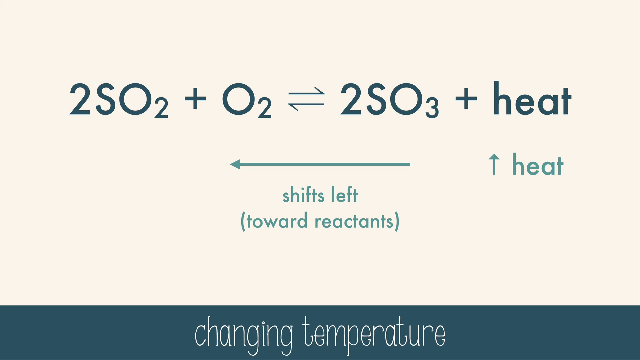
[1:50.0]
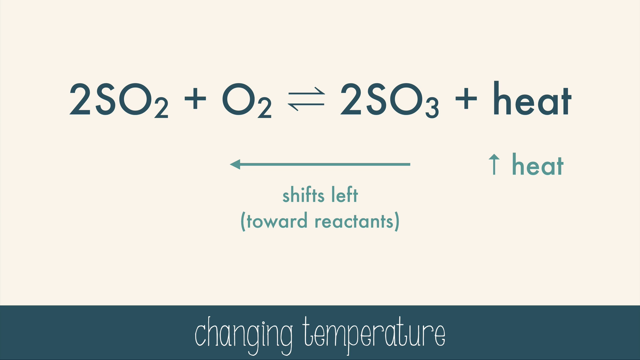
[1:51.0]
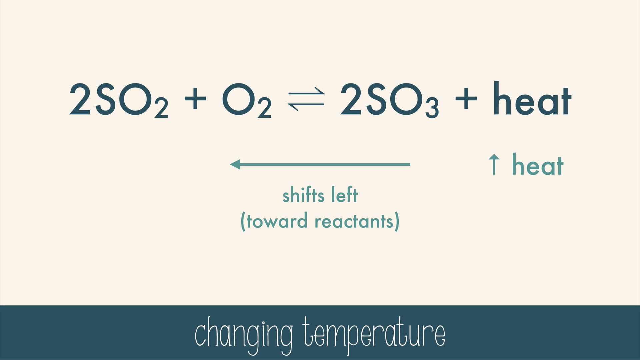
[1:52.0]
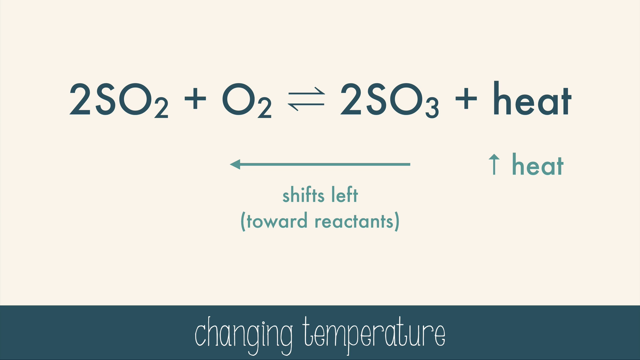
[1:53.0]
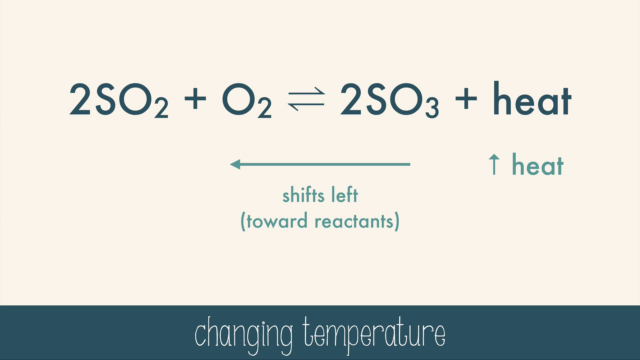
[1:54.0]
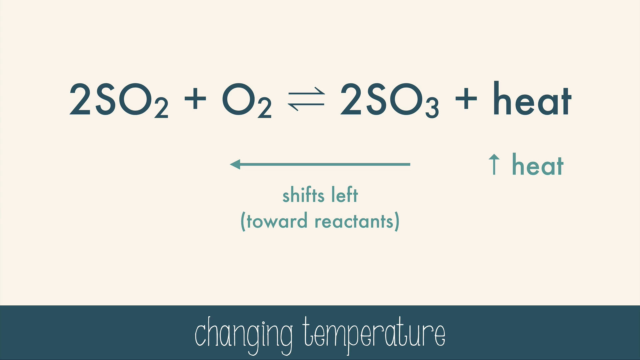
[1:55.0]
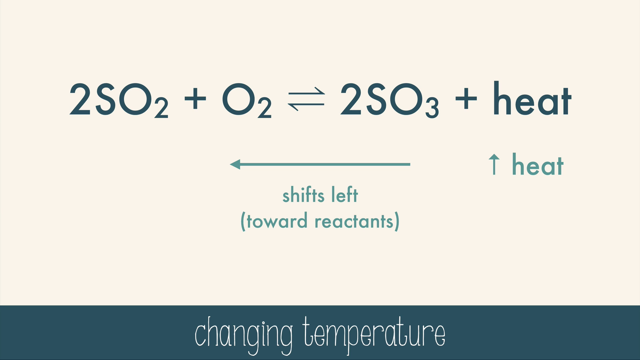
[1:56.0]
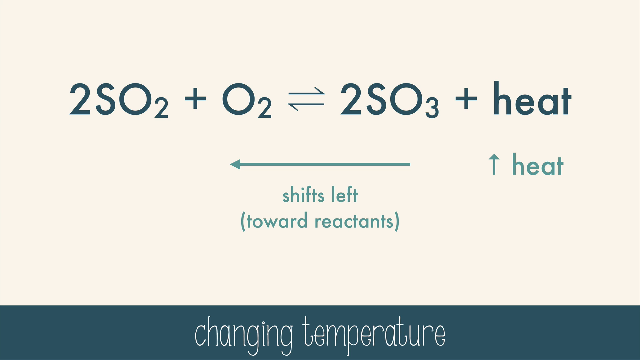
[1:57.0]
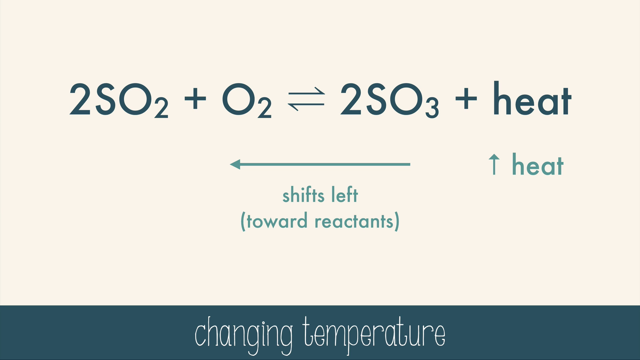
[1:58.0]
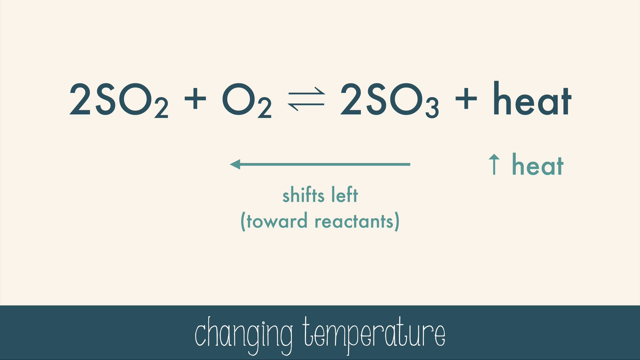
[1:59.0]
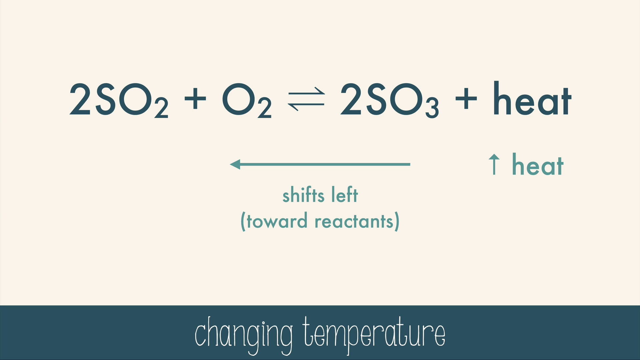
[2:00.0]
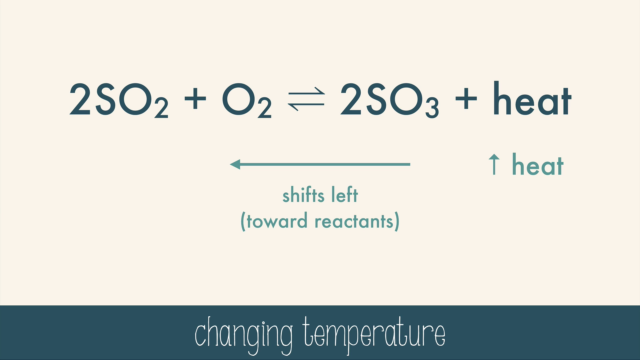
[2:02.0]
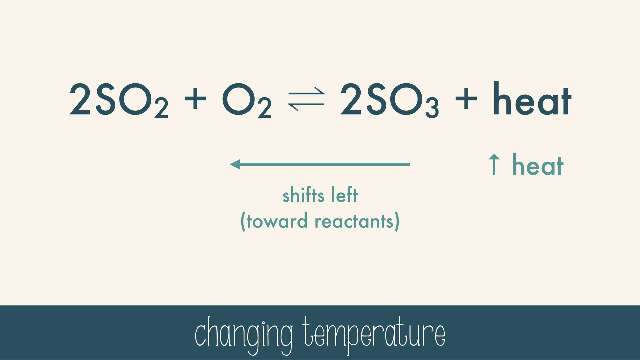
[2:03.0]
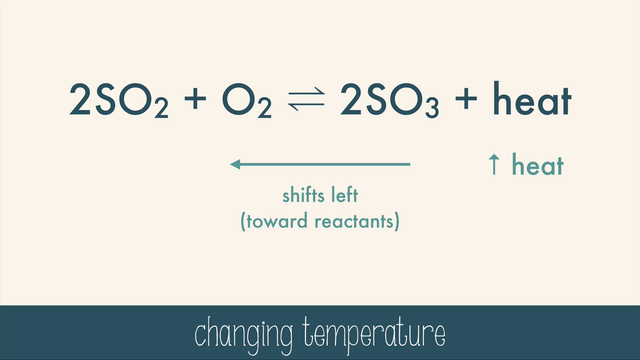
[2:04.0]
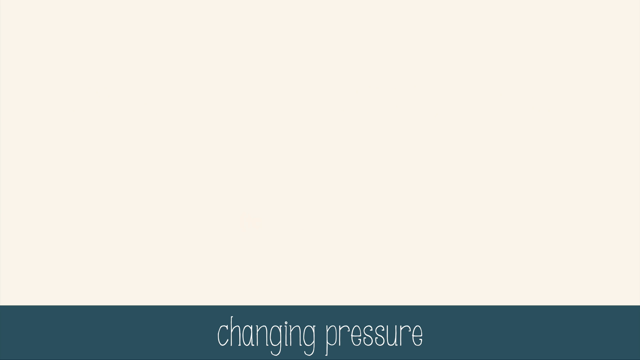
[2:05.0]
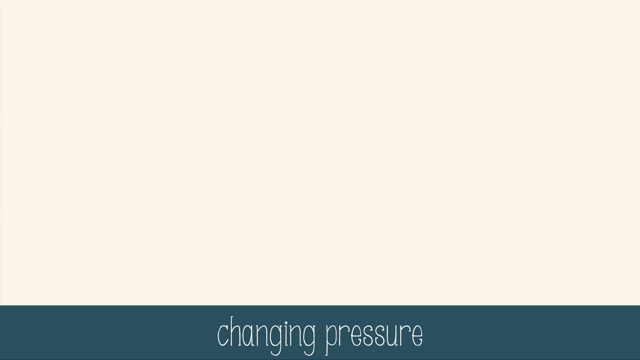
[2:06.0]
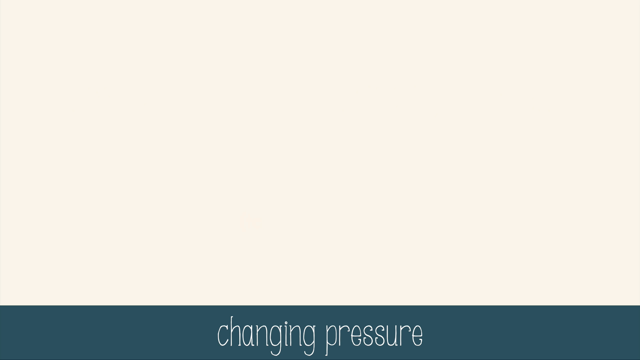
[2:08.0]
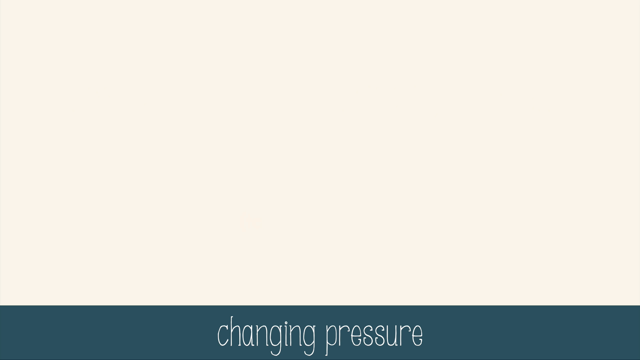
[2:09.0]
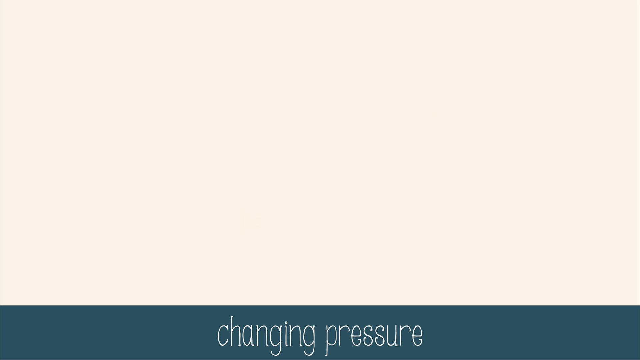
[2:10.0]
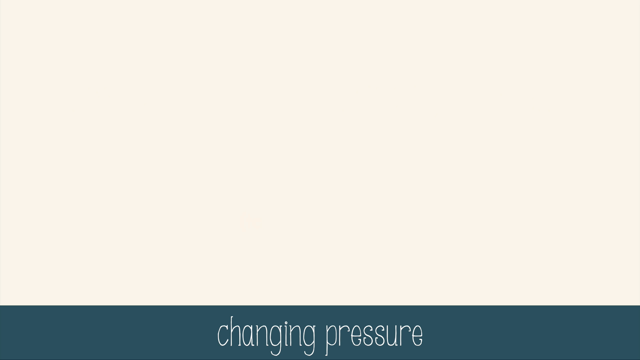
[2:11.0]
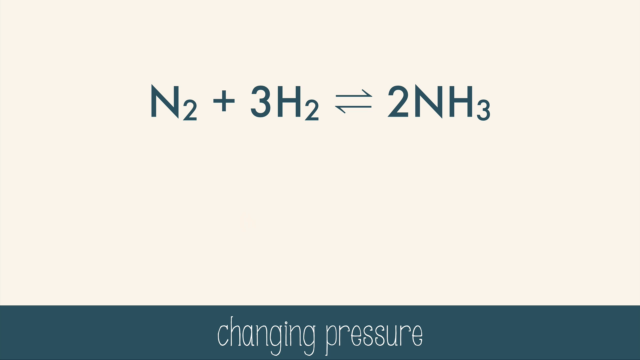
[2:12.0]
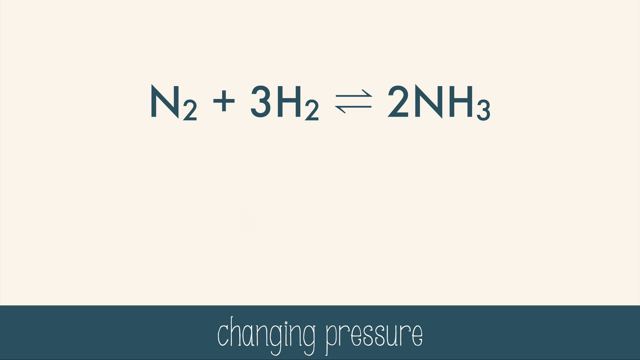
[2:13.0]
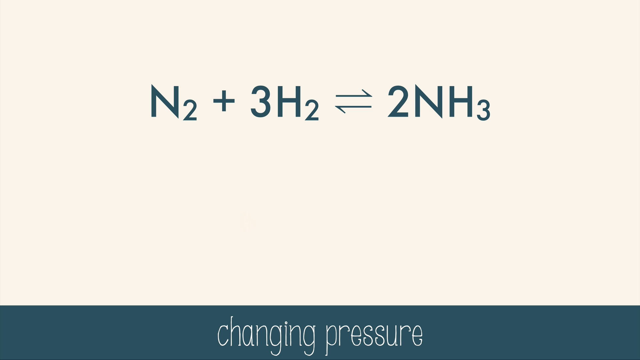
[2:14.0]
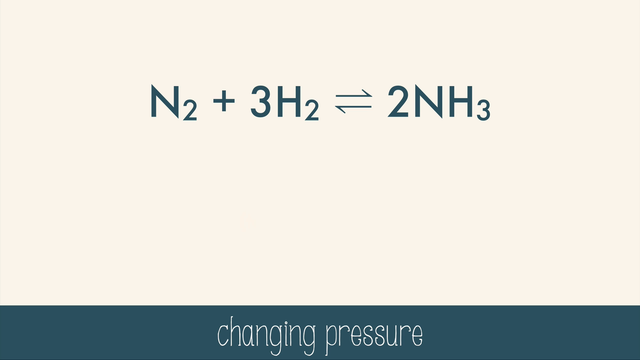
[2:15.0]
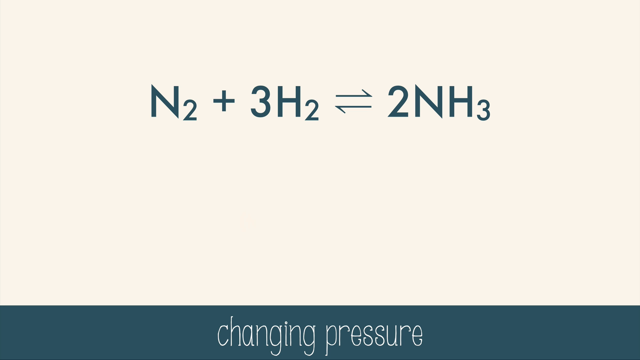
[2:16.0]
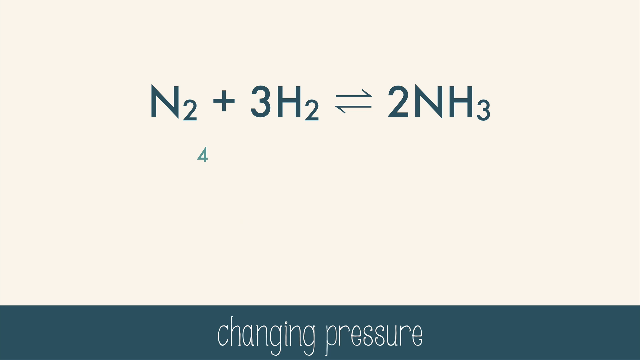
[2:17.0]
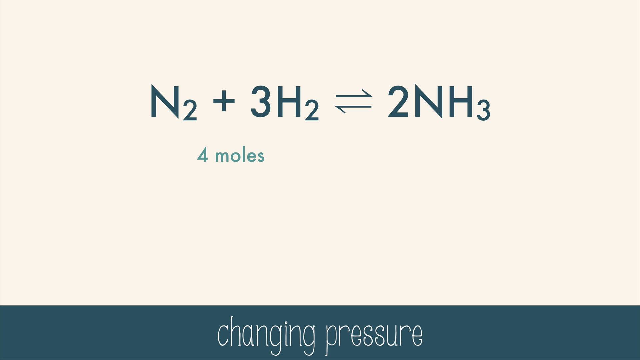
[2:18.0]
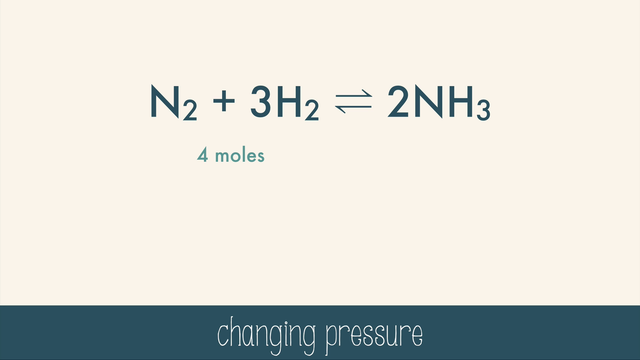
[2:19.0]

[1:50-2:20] On a tan background is the equation 2SO2 + O2, followed by two lines pointing each way and then 2SO3 + heat. Under the + heat are an upward arrow and "heat", followed by a left-pointing arrow with "shifts left towards reactants". Below this, a blue banner reads "changing temperature" in white text. The slide stays for several seconds, then the text is removed, leaving the tan background. The blue banner at the bottom now reads "changing pressure". The equation N2 + 3H2, two lines, and 2NH3 appears, and under it, in light blue text, "four moles" and then "two moles".